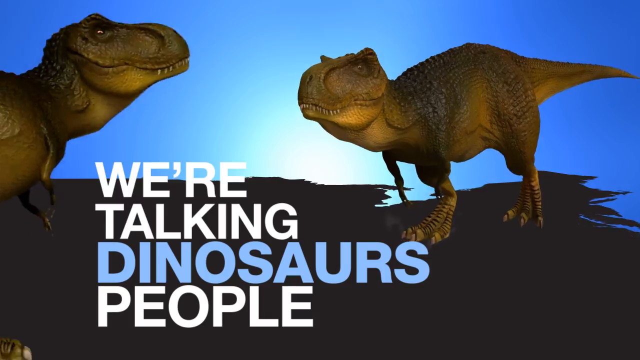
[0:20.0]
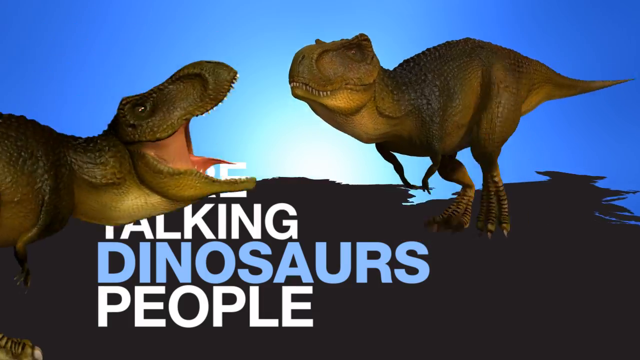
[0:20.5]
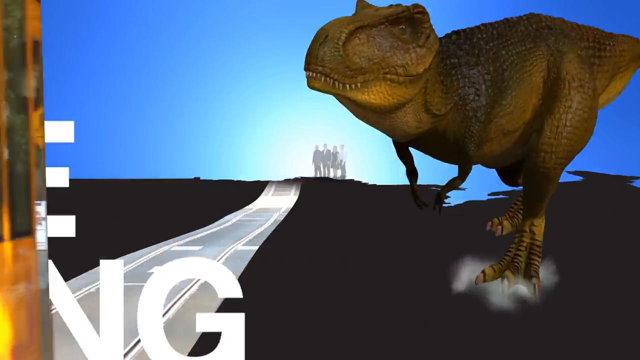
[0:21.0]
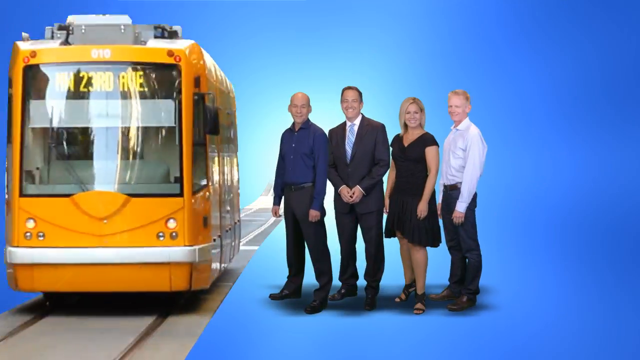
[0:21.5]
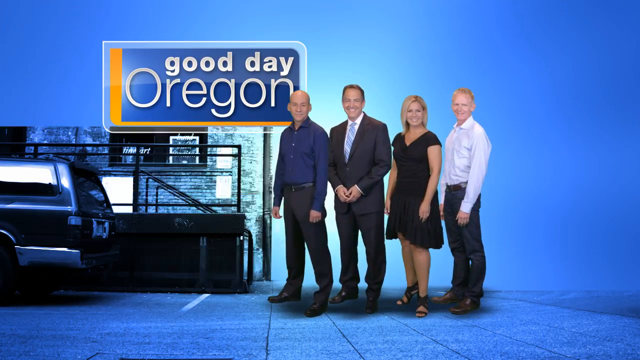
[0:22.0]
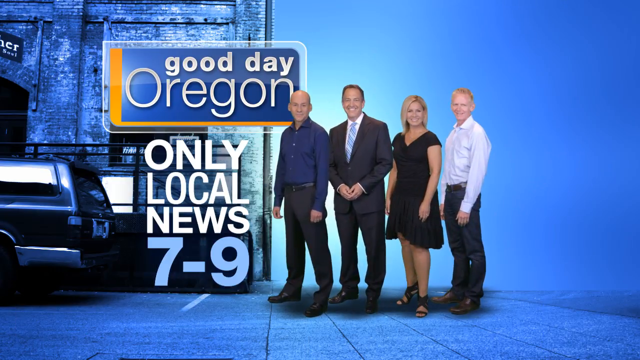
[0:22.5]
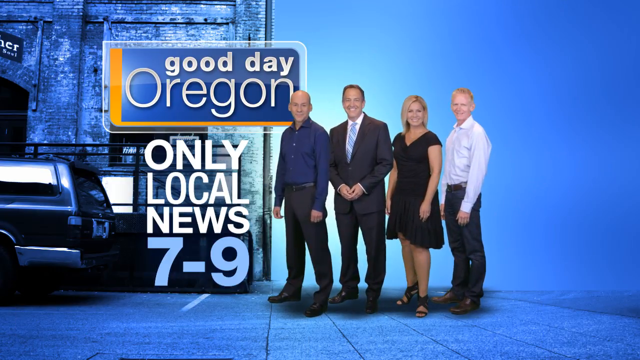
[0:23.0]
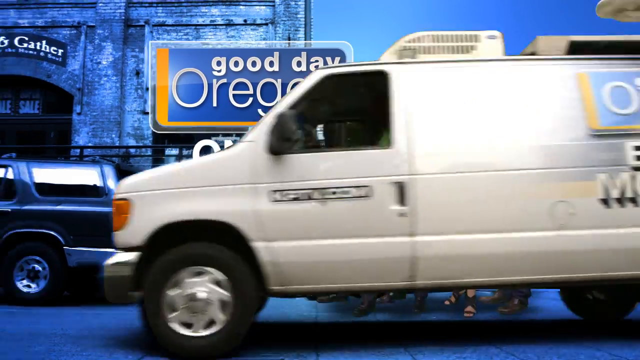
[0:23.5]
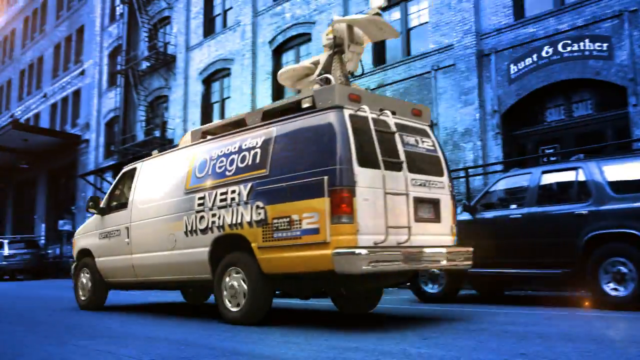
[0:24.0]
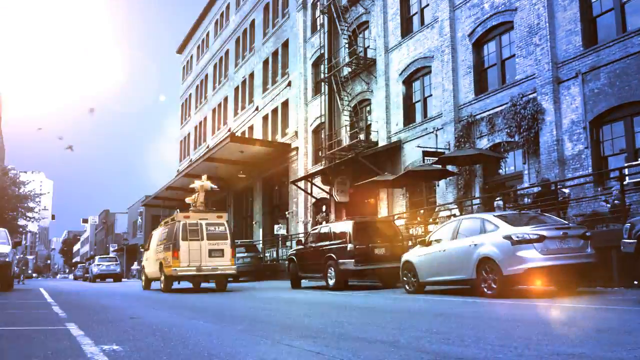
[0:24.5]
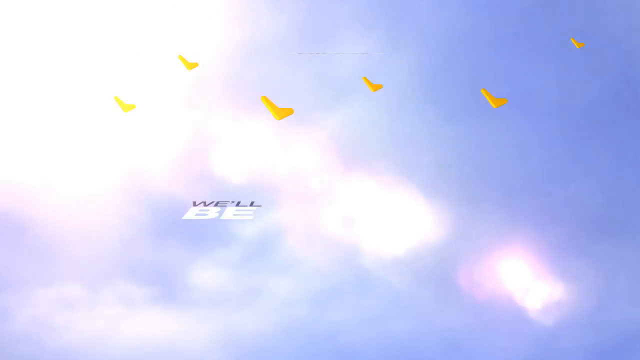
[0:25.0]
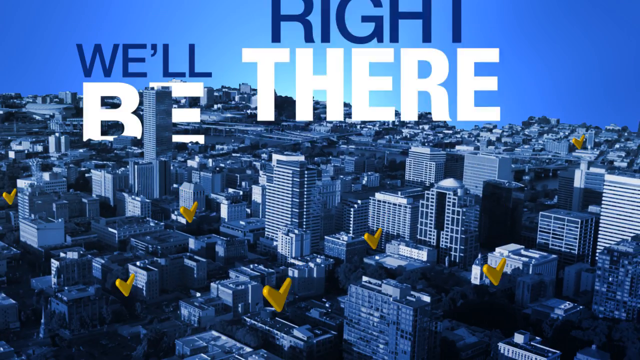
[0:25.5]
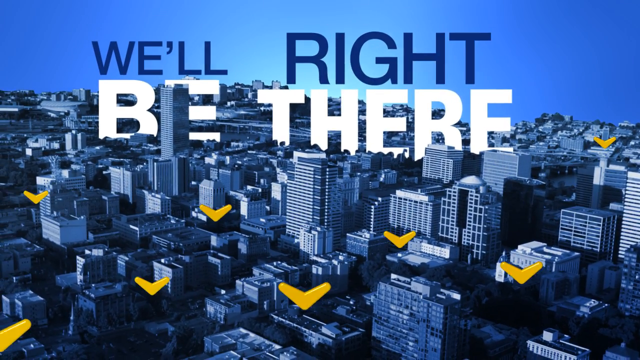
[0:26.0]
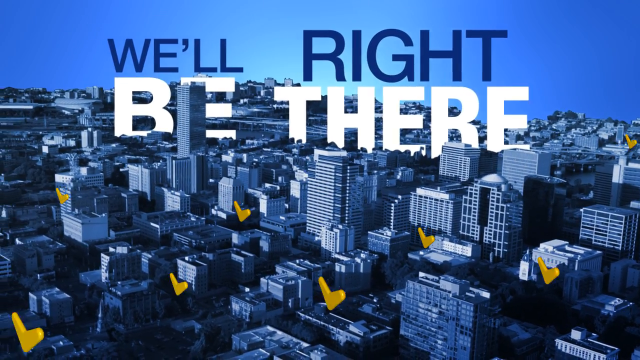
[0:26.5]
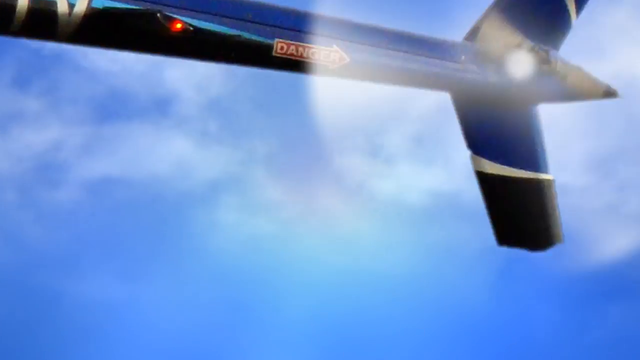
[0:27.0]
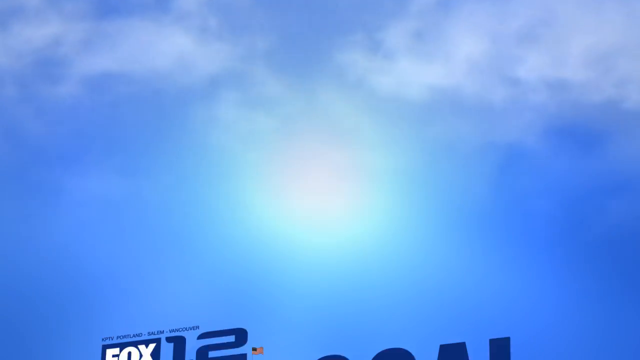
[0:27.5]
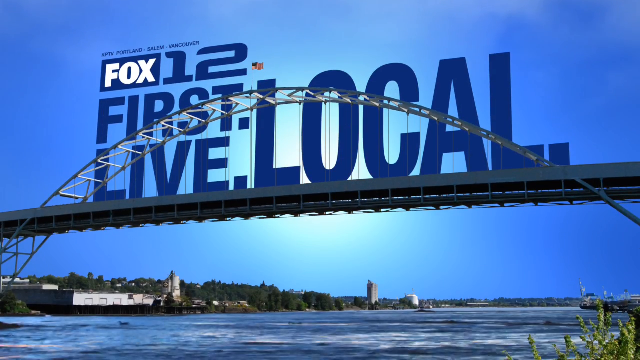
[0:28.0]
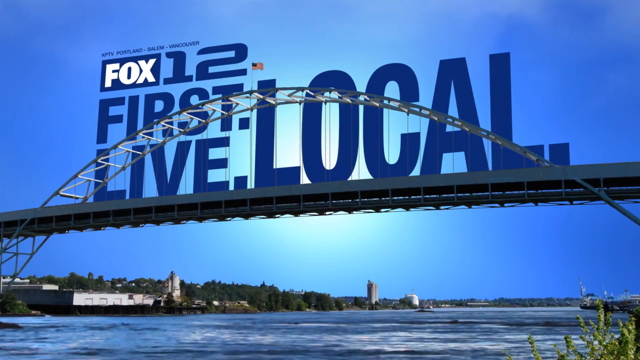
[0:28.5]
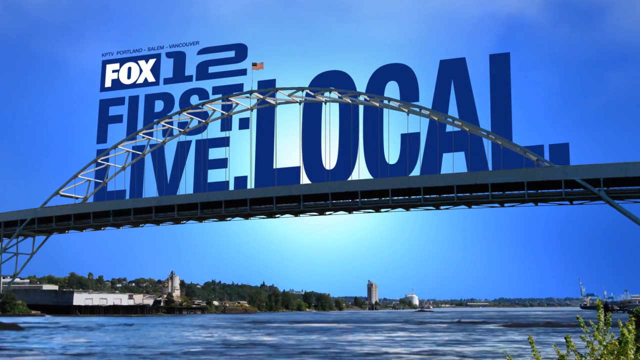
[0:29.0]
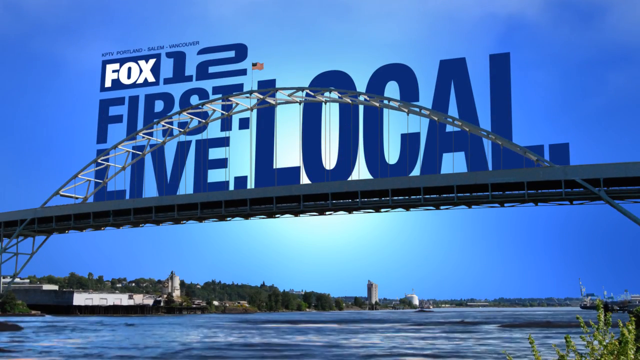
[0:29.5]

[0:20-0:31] Two dinosaurs appear with "we are talking dinosaurs people" written boldly in capital letters between them, and one of the dinosaurs opens its mouth wide. Another slide follows with "good day Oregon," "only local" and "from seven to nine." Behind that caption stand four people facing the camera: a bald-headed man in navy blue and black trousers at the front, a man in a black suit, blue tie and white shirt behind him, a woman in a sleeveless black dress and black sandals with blonde hair and a smile on her face, and a last man wearing a white shirt and black shoes. Next, a bus with "Oregon news" on it drives very fast in front of a very large building where cars, buses and a jeep are parked. A picture of a city appears with "We will be right there" written in bold letters on top of it. Finally, "Fox 12, first live local" is shown.